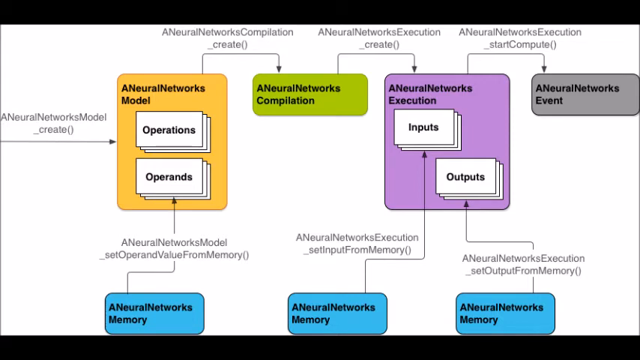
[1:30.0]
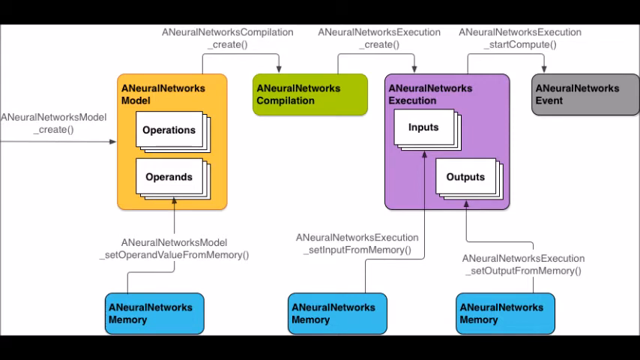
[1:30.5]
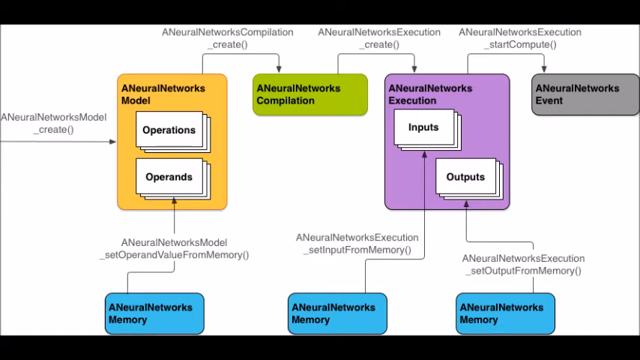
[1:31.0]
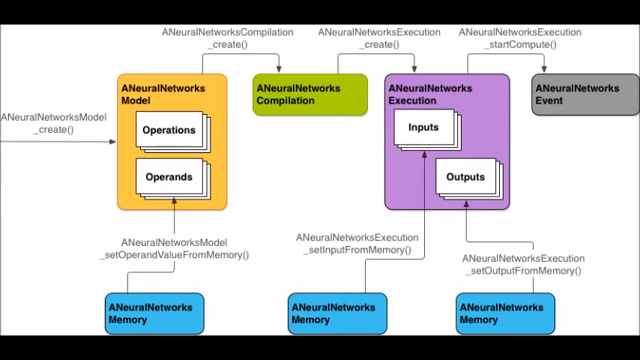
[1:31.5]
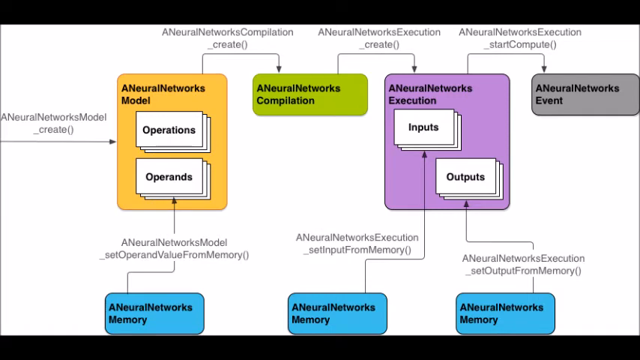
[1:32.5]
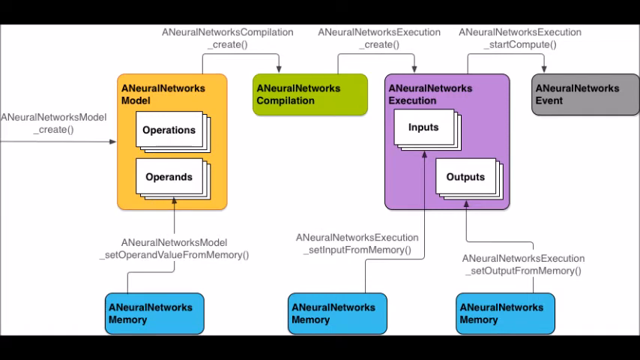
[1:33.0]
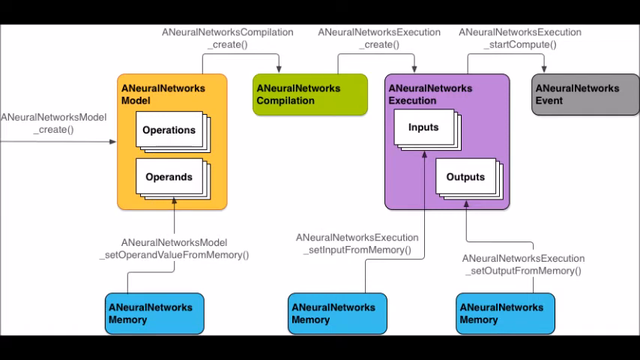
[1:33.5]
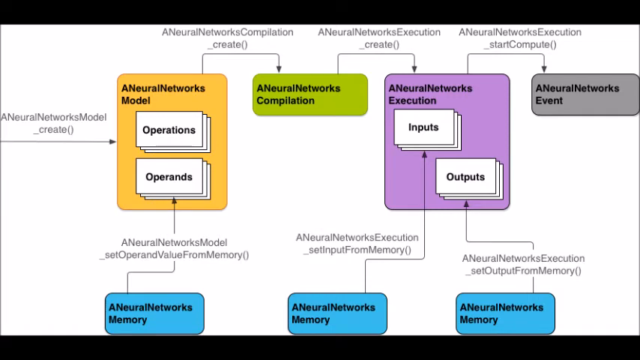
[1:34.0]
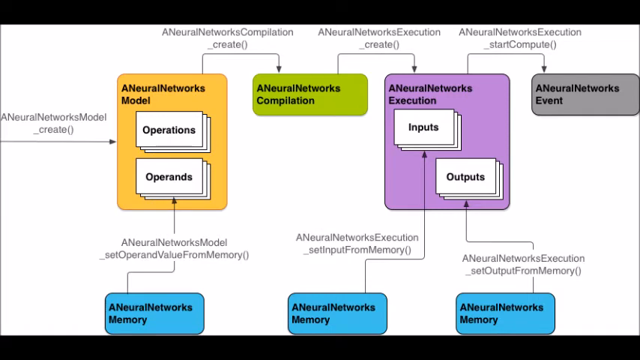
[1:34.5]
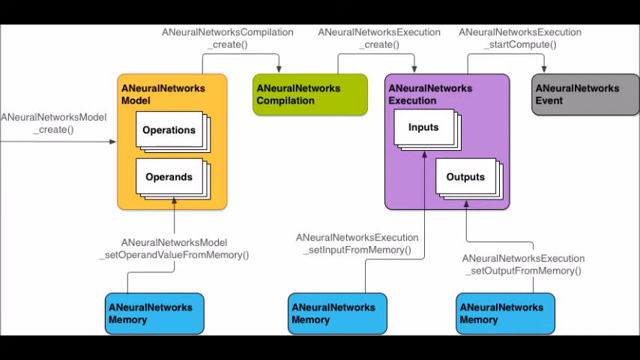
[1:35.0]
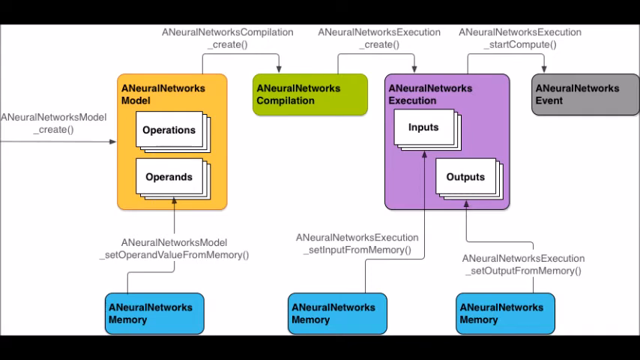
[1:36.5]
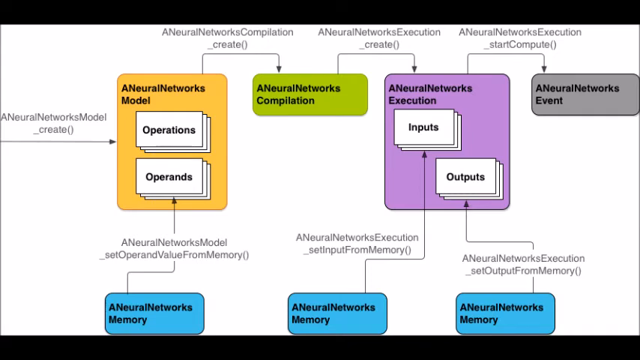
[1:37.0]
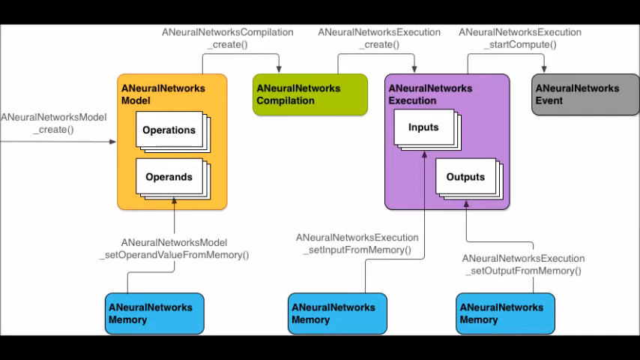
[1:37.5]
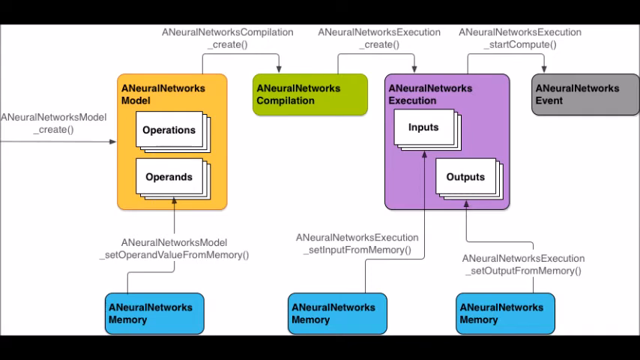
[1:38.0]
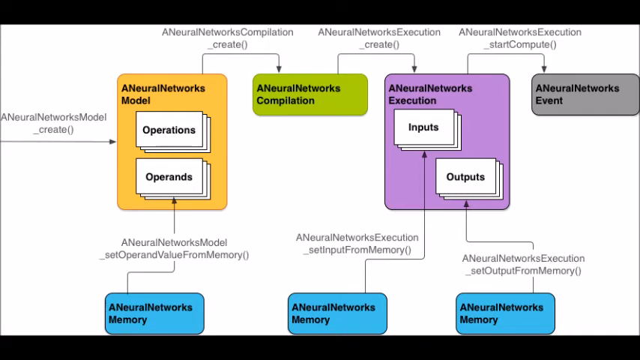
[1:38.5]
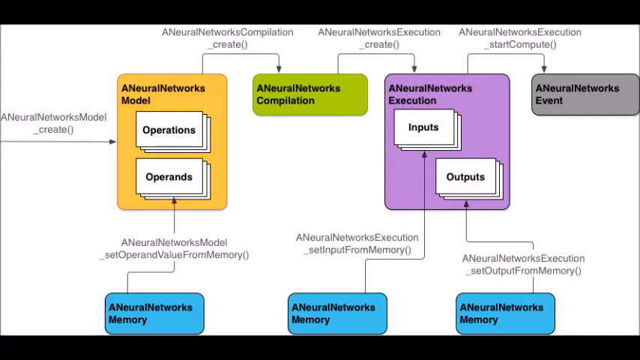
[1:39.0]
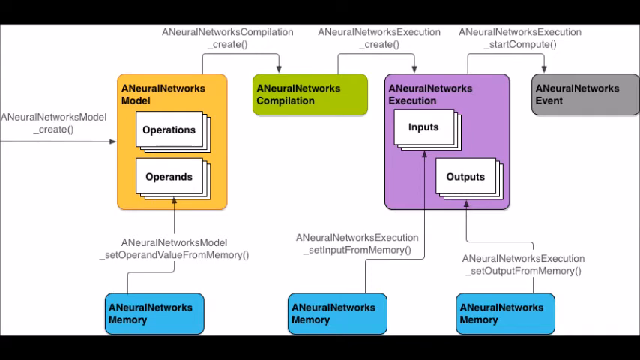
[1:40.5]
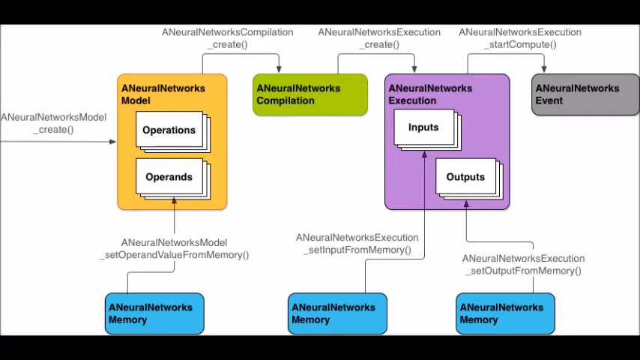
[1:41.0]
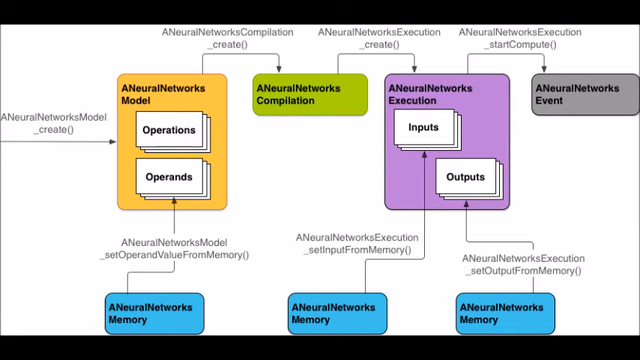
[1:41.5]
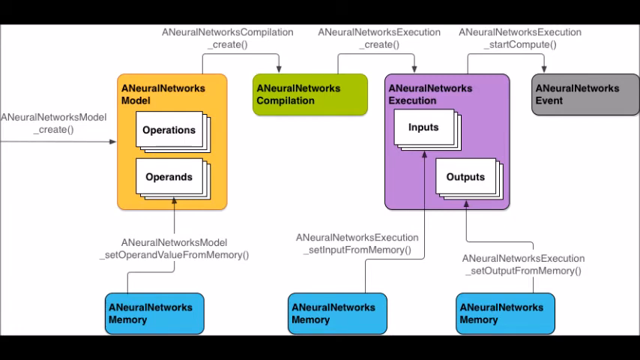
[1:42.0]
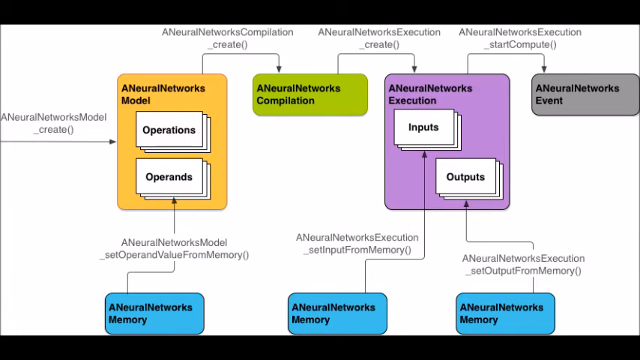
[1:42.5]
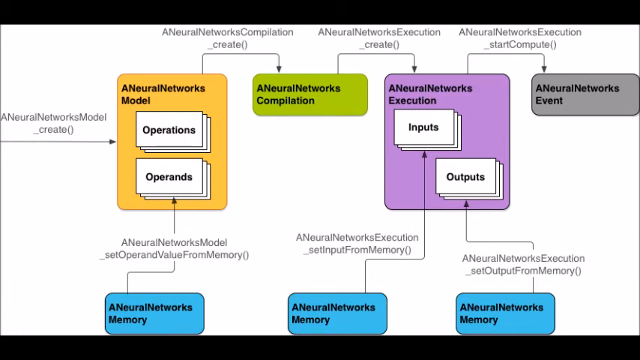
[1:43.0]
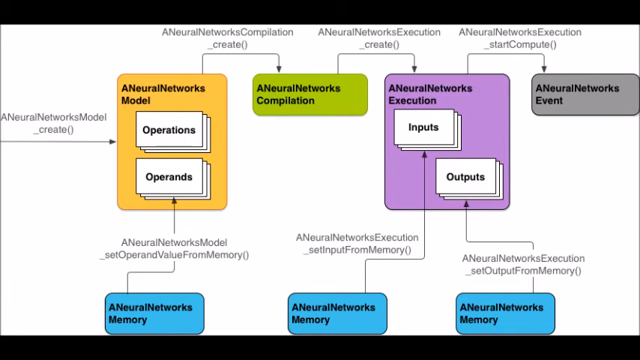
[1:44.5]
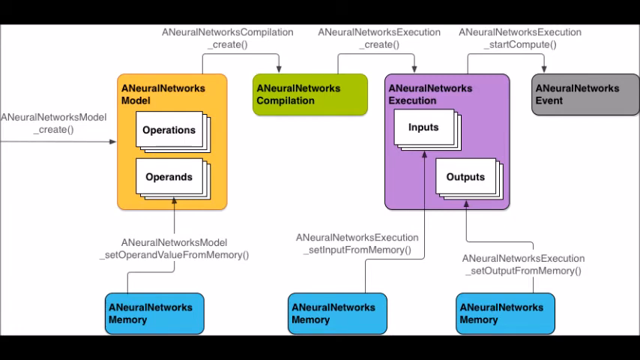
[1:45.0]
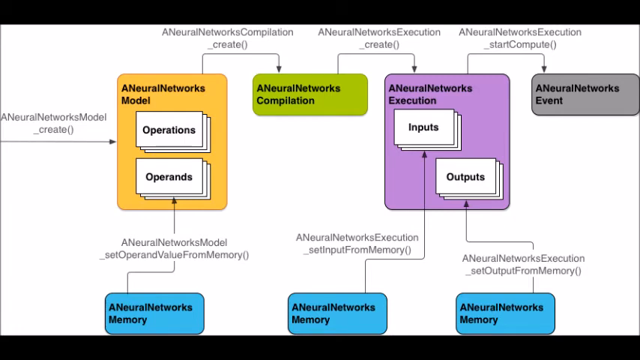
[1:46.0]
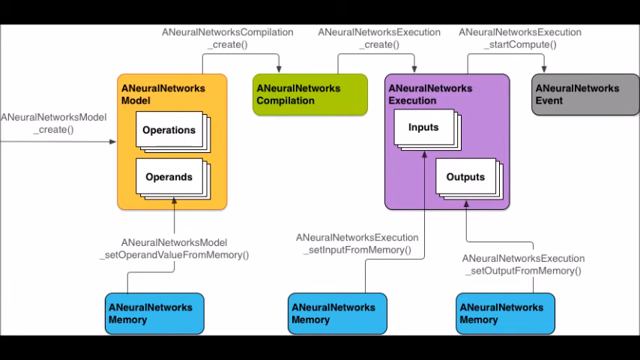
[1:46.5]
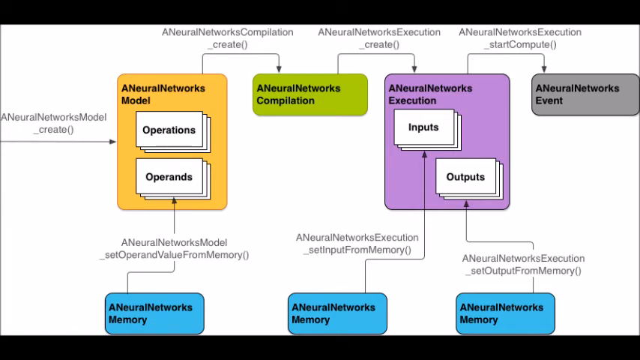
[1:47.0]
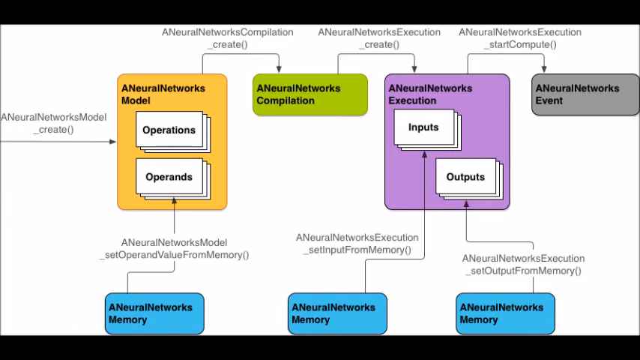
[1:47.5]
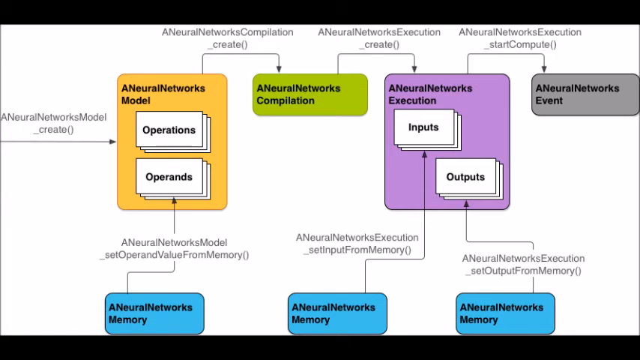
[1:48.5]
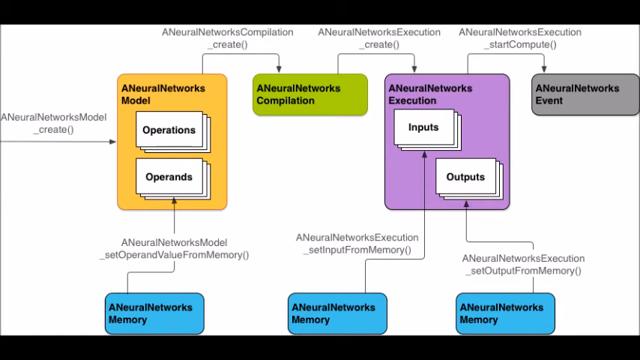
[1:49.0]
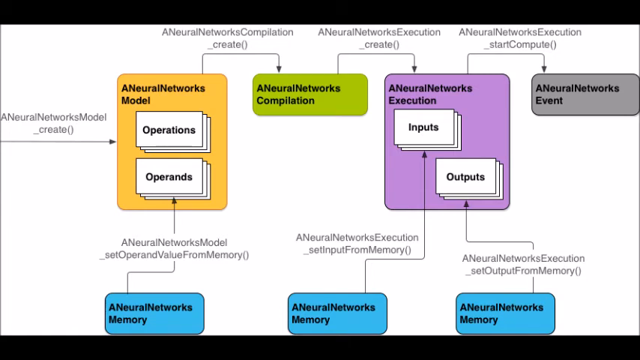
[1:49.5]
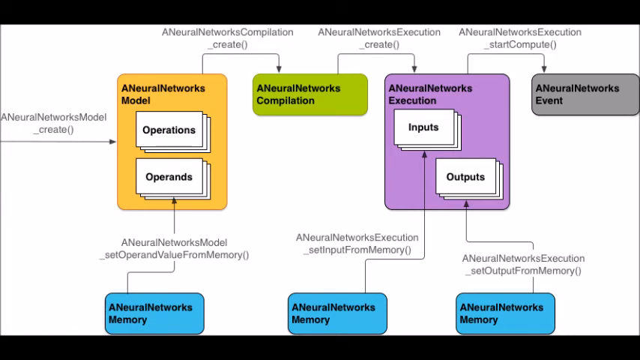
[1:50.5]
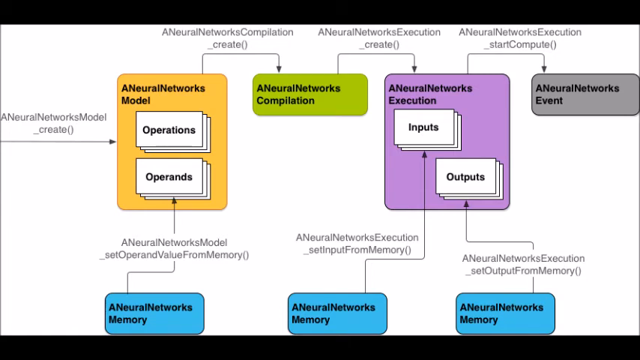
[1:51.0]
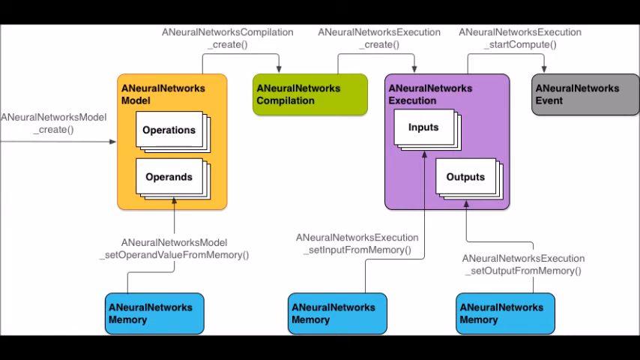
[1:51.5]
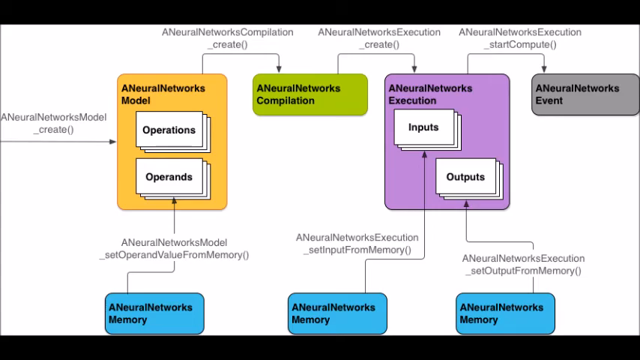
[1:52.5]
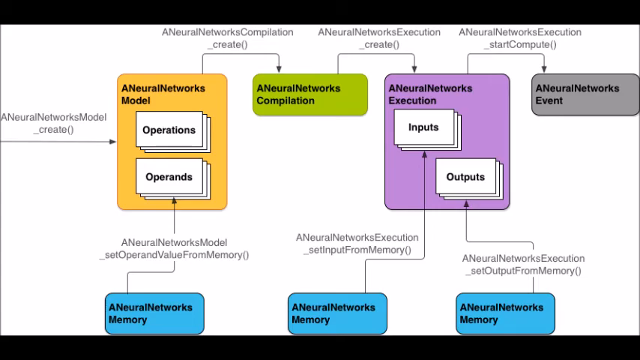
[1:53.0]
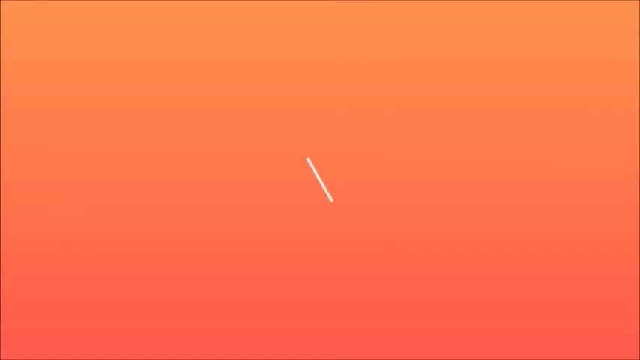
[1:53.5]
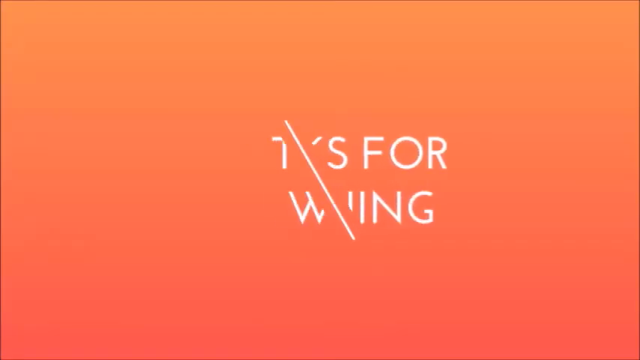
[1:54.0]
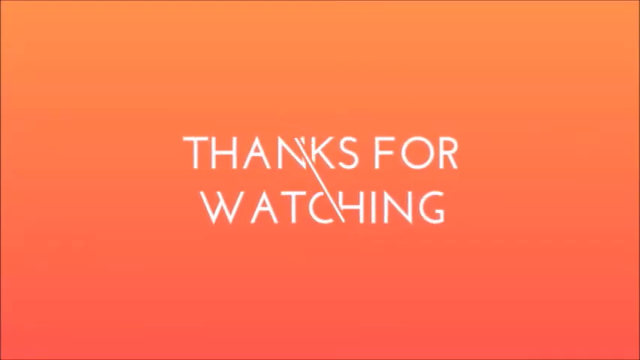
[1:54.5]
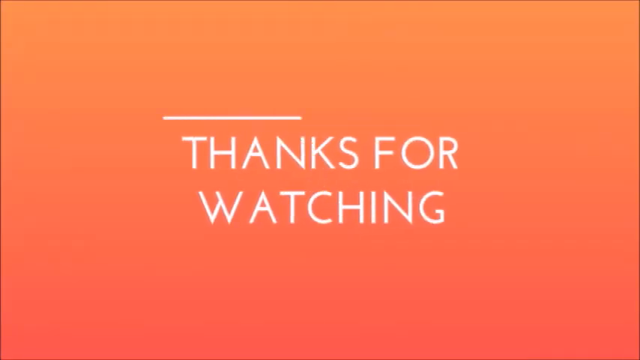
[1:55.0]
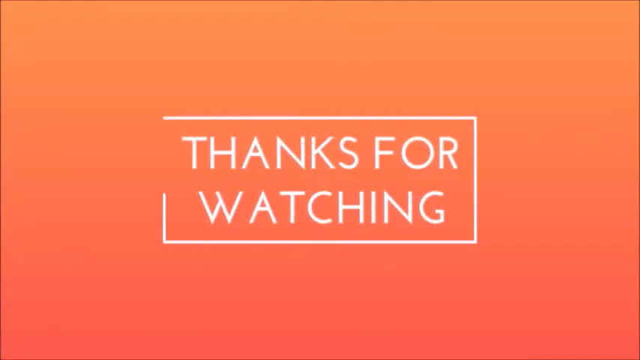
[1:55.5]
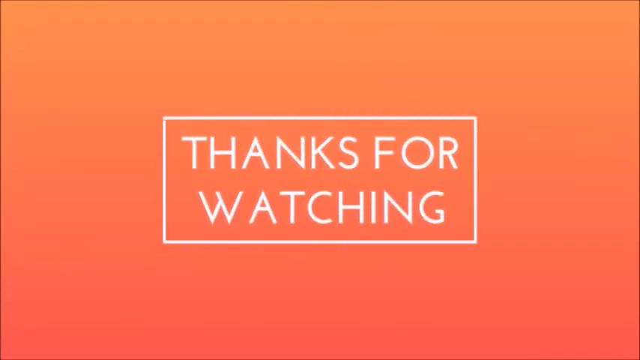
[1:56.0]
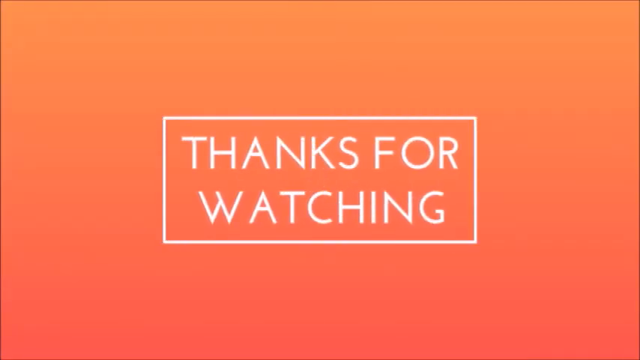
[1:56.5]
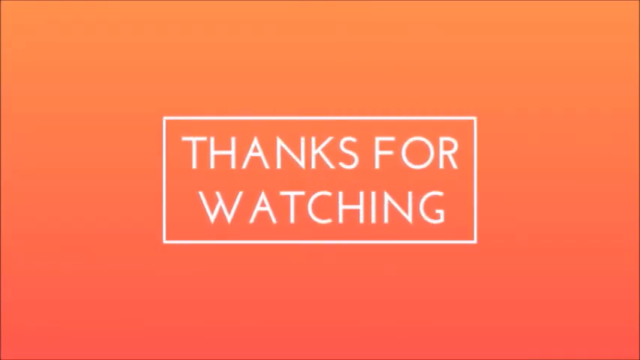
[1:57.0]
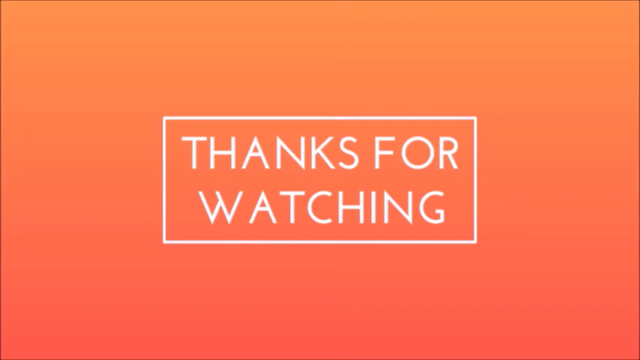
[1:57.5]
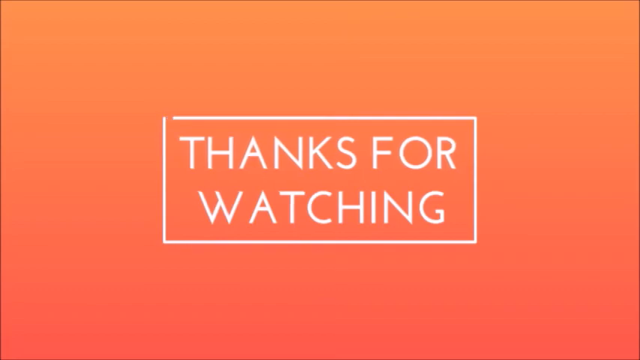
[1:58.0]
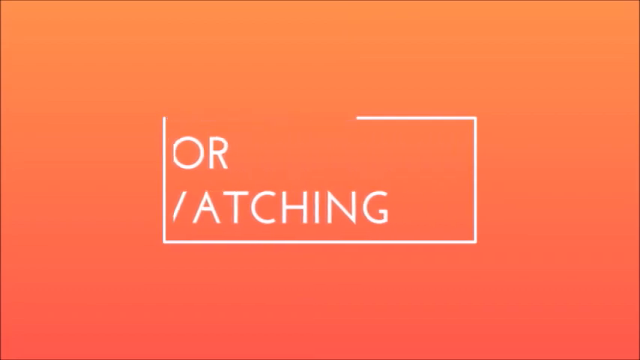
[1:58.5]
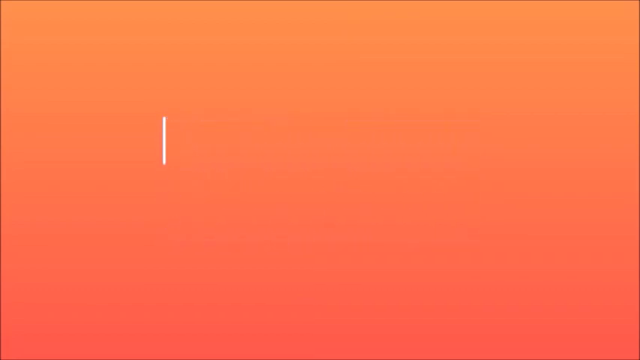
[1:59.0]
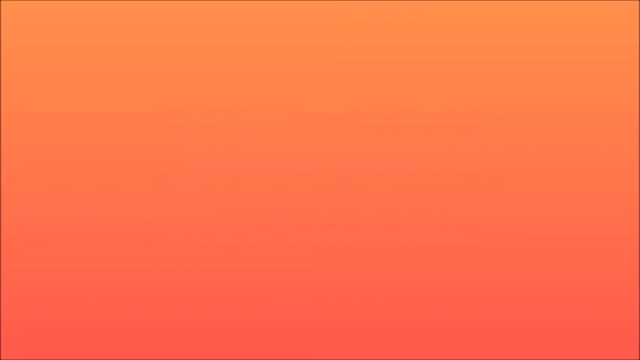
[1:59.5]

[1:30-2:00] The same graph remains, showing the different neural networks and how they are connected by various coding flags. Toward the end, a "THANKS FOR WATCHING" screen appears: a square or rectangle forms, it is a white rectangle, and "THANKS FOR WATCHING" in all caps appears in the middle of the box, all on a gradient orange and red background. Very briefly, what comes next is visible; it possibly says "like".